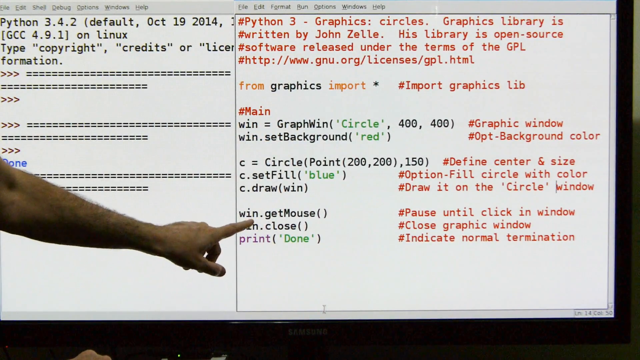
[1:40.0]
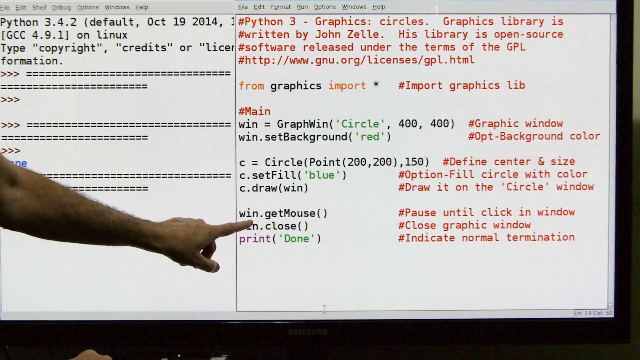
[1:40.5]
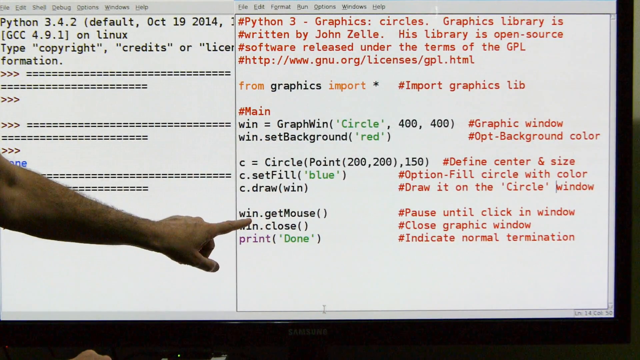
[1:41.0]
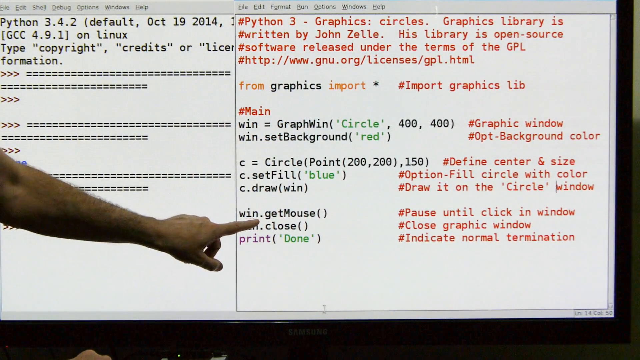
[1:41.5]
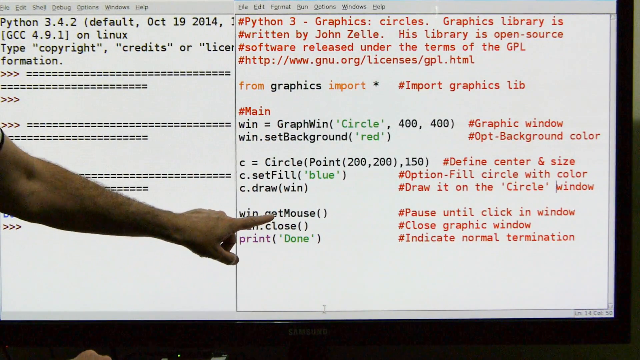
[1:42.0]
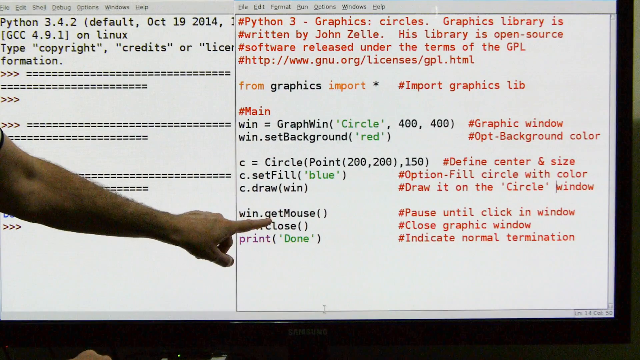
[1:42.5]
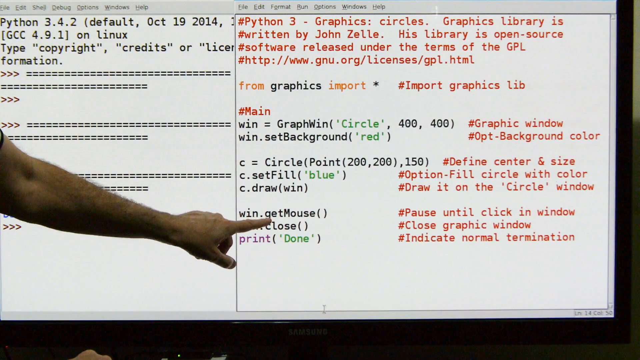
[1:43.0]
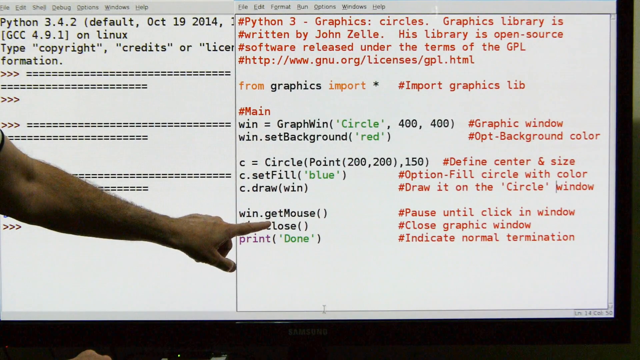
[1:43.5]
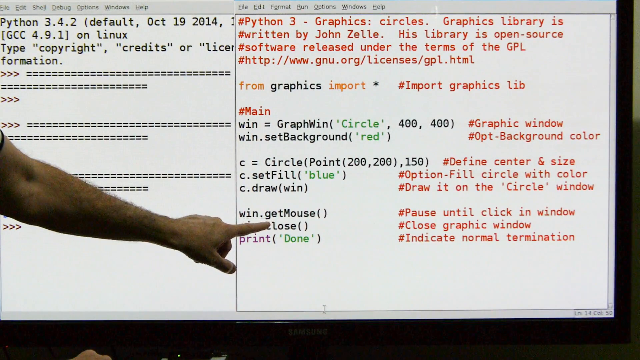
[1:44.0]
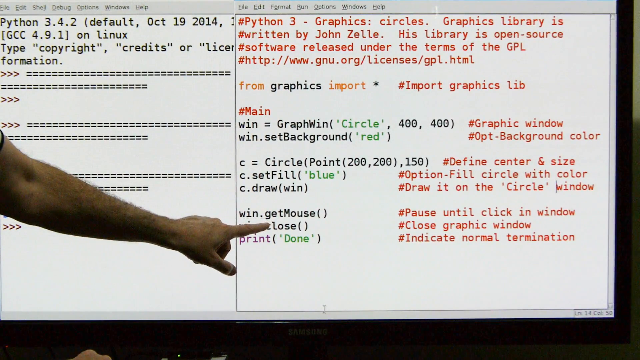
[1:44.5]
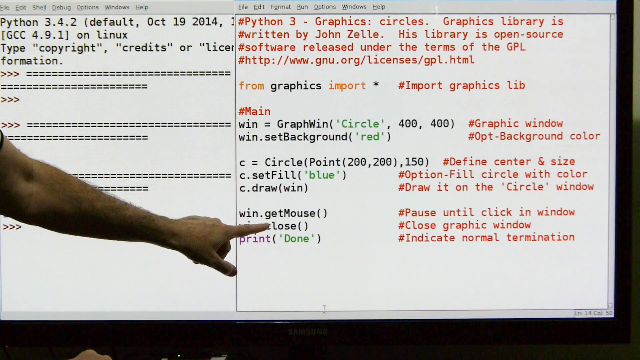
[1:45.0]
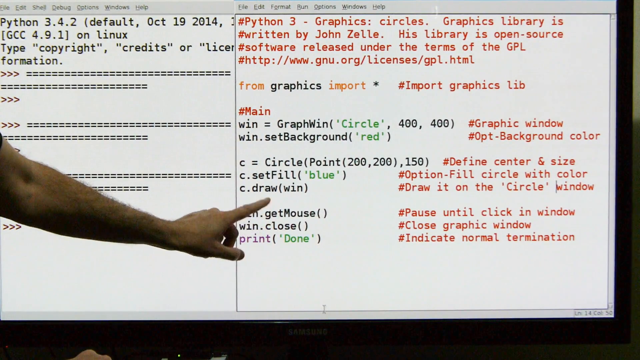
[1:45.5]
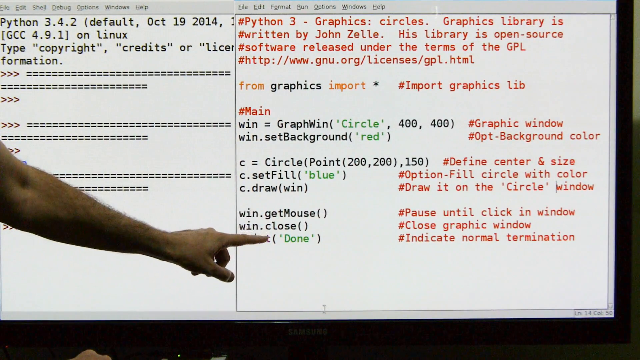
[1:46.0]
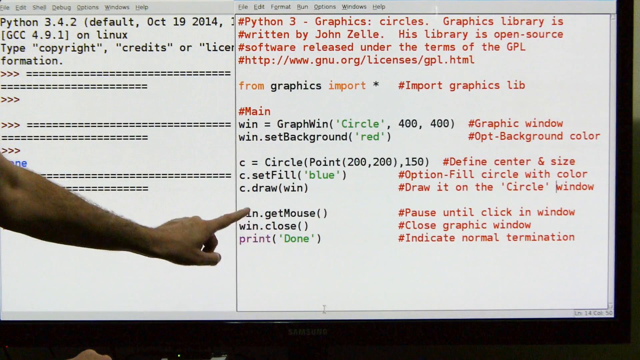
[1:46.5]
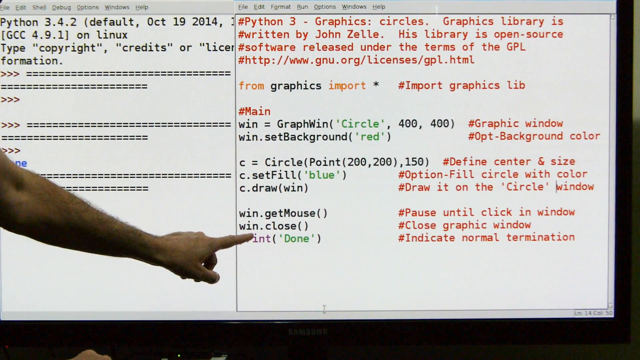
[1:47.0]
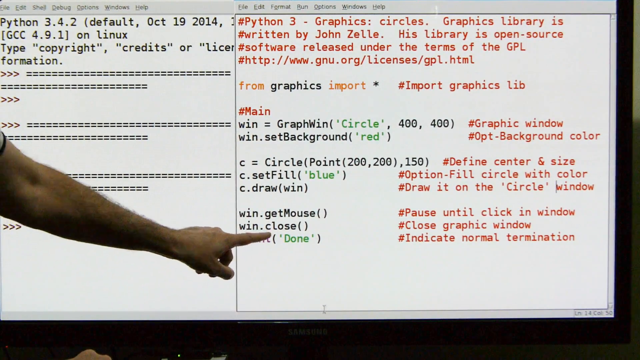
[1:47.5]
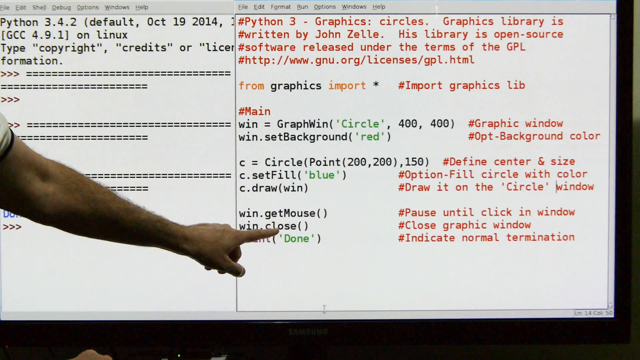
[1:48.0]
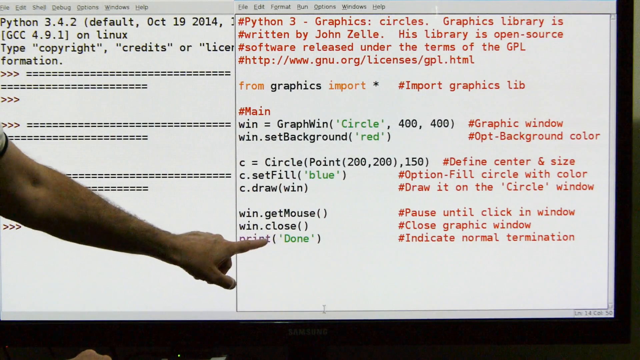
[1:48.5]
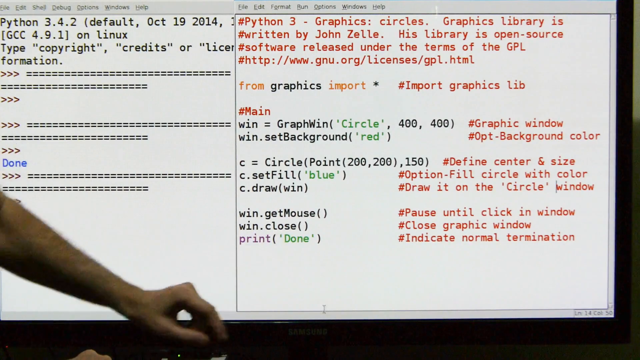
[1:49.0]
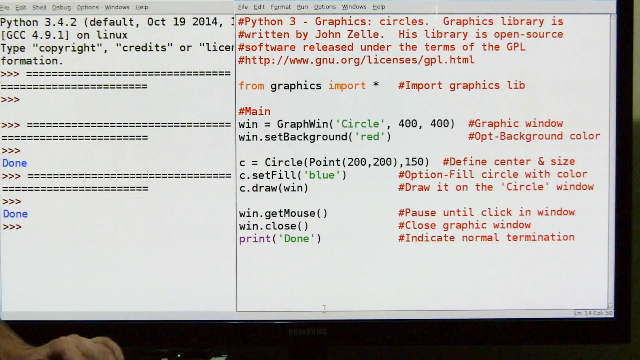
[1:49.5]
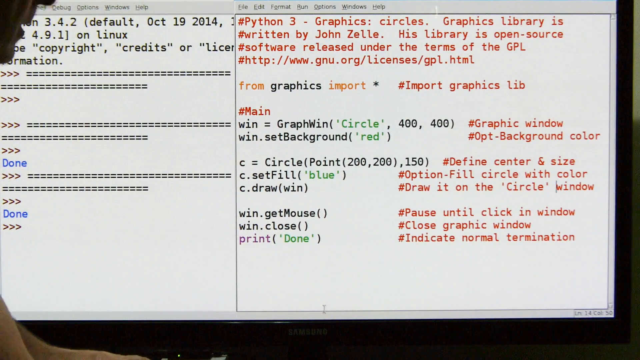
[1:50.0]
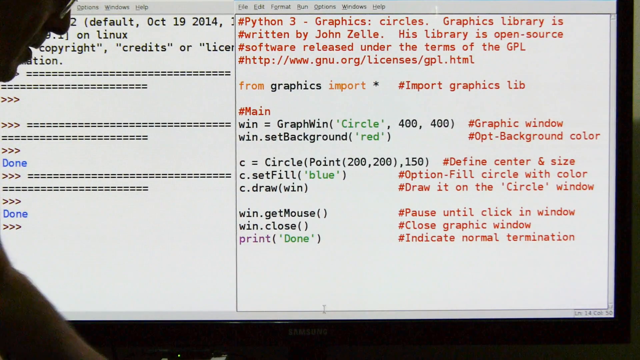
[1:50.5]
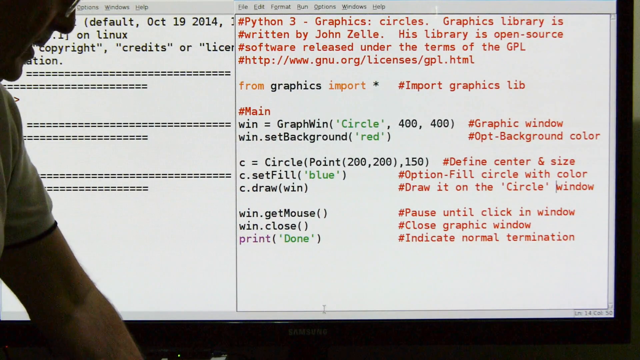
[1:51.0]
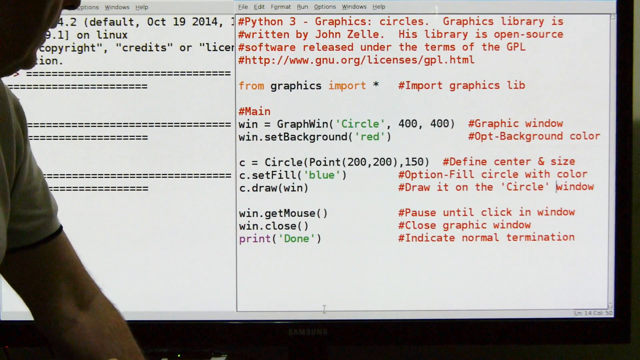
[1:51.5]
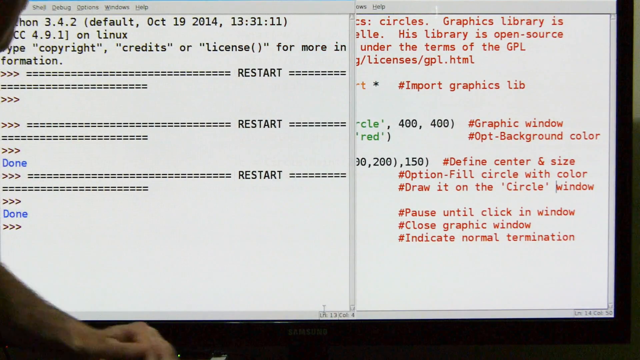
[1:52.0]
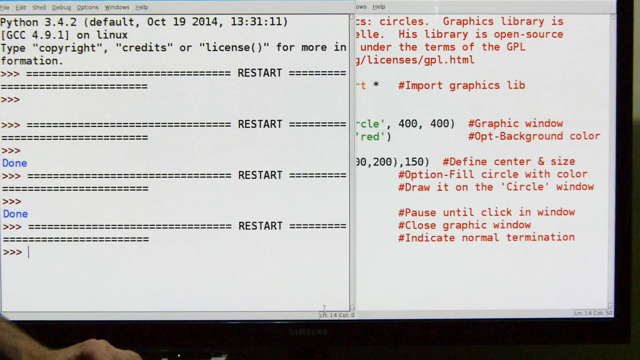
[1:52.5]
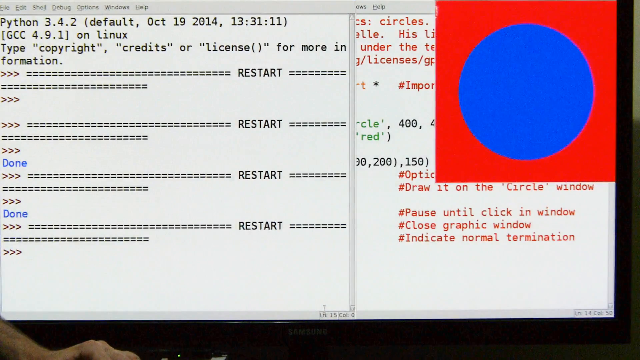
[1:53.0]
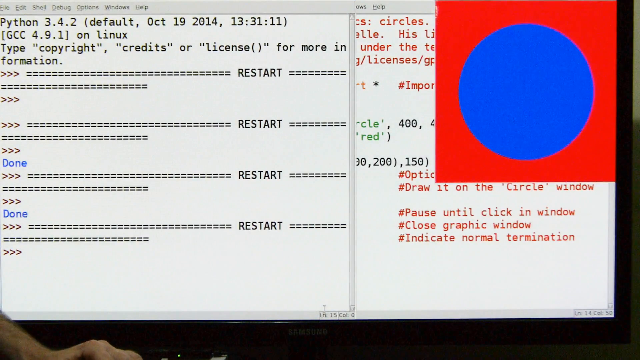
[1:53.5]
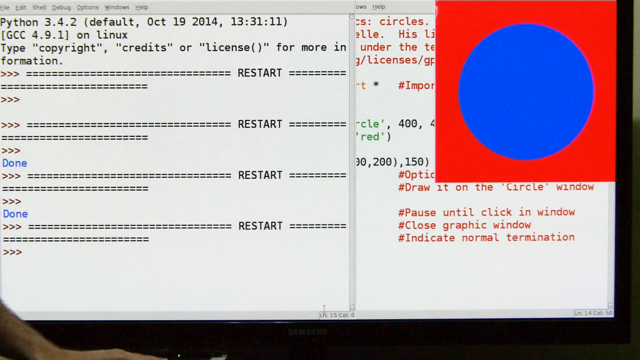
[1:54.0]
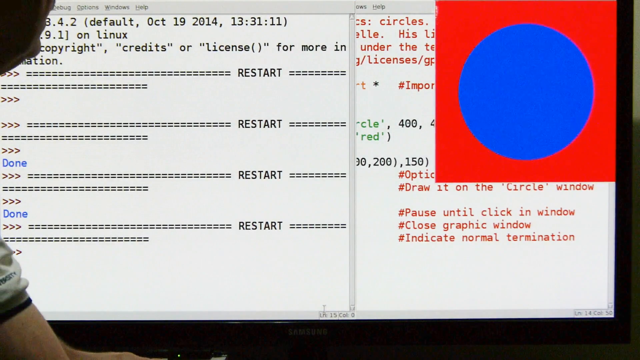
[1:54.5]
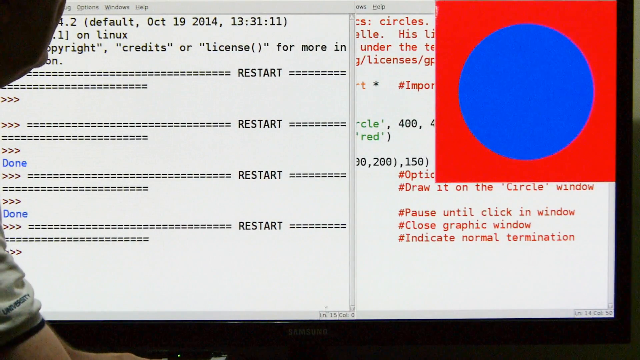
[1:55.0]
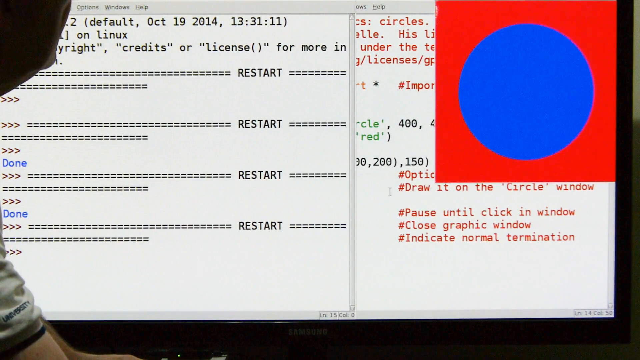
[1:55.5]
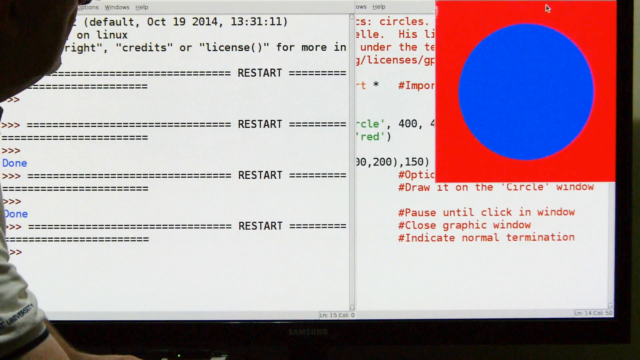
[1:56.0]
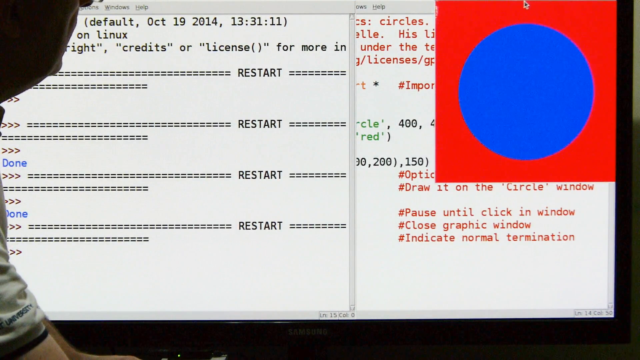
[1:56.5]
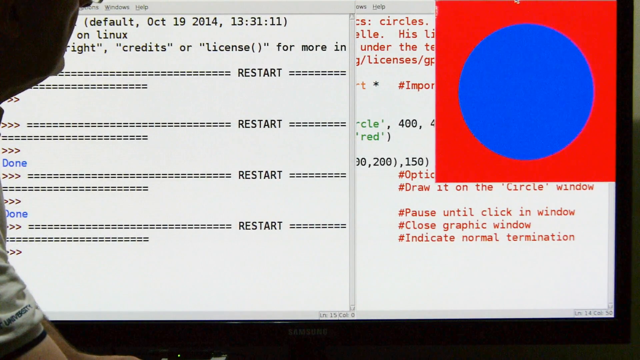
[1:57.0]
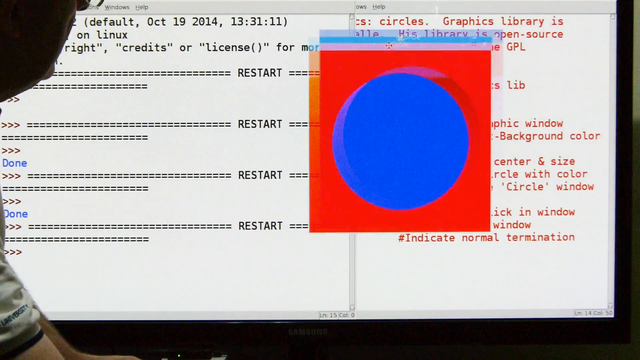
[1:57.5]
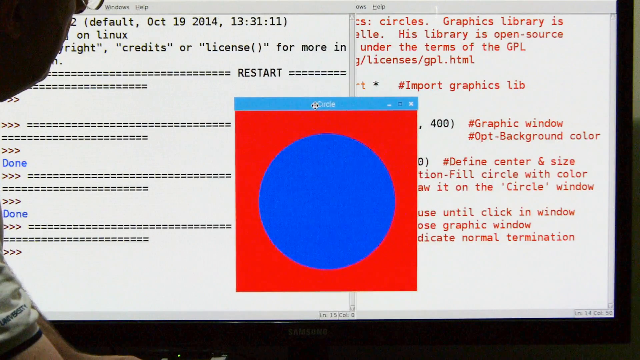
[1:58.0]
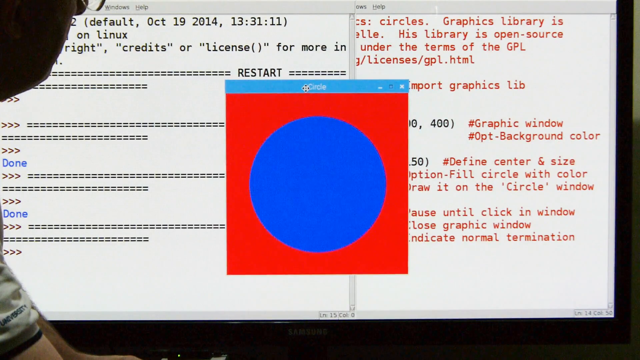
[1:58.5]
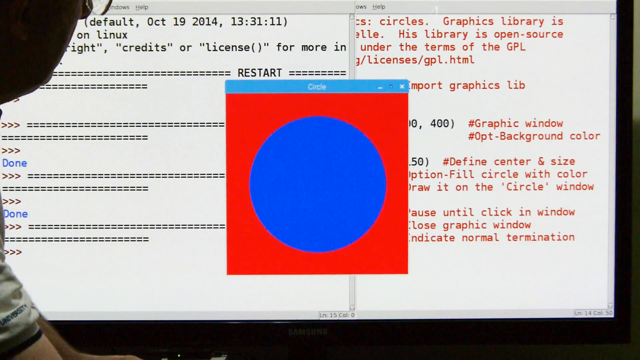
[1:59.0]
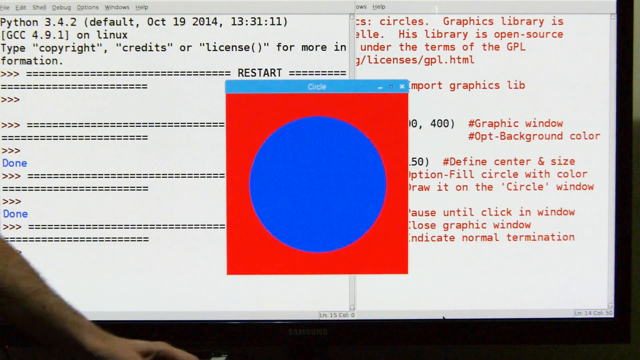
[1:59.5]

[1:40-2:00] The instructor moves on to the next paragraph, explaining "pause until click in window," and shows the display of the circle that is to be constructed: a blue circle with a red background. The last paragraph reads "pause until click in window," "close graphic window" and "indicate normal termination." On the left side of the board, the word "restart" is repeated on each line. At the top there is a date and time, and there appear to be credits or license and "for more information" text. The teacher's face is visible, but the person cannot be identified.